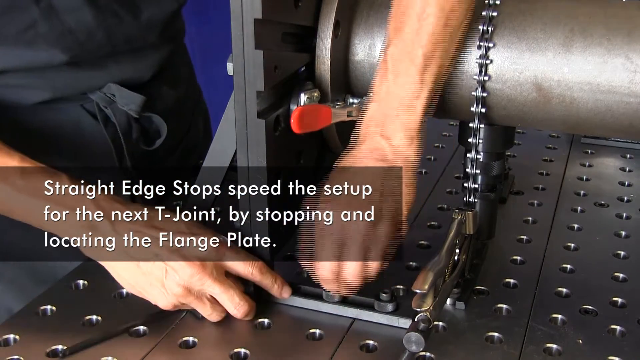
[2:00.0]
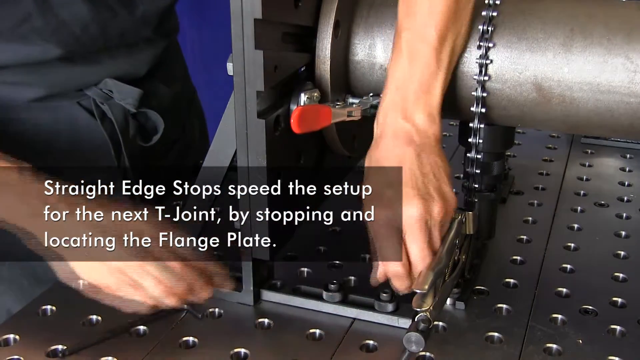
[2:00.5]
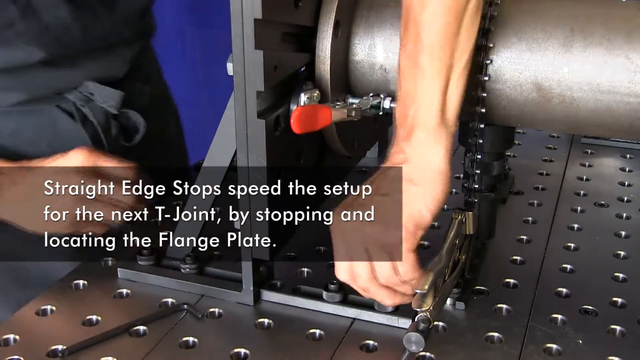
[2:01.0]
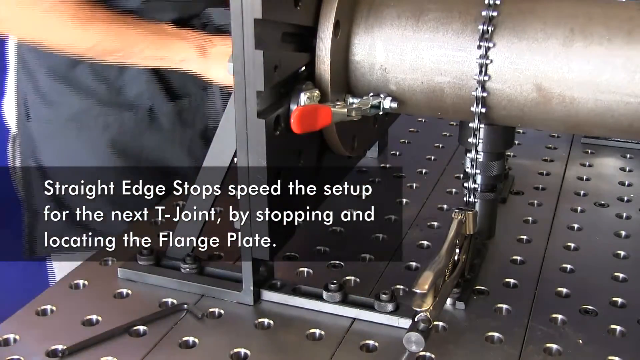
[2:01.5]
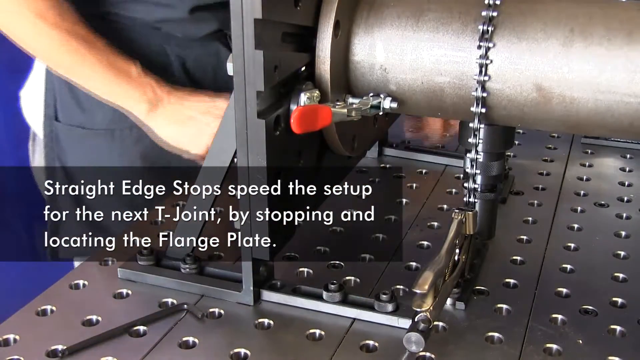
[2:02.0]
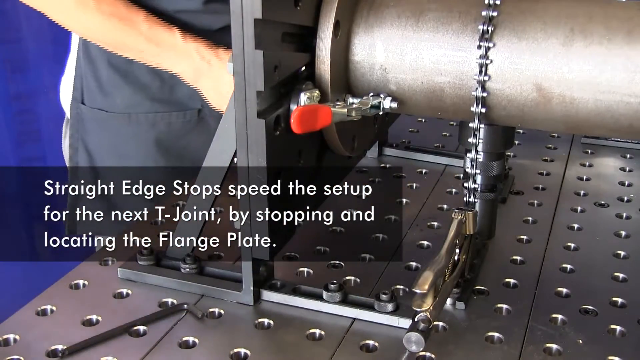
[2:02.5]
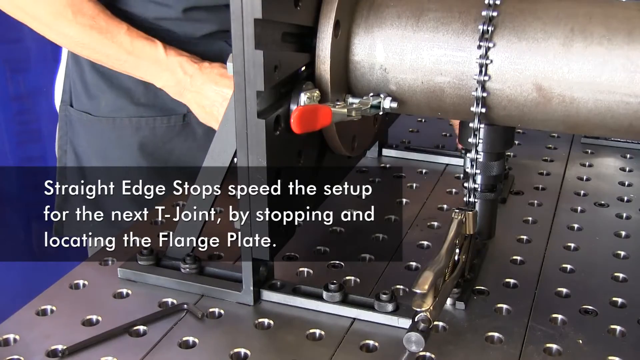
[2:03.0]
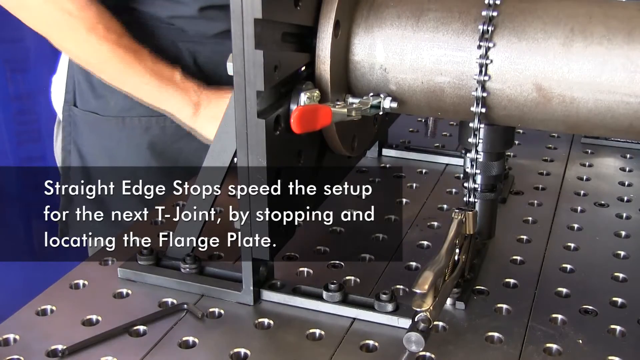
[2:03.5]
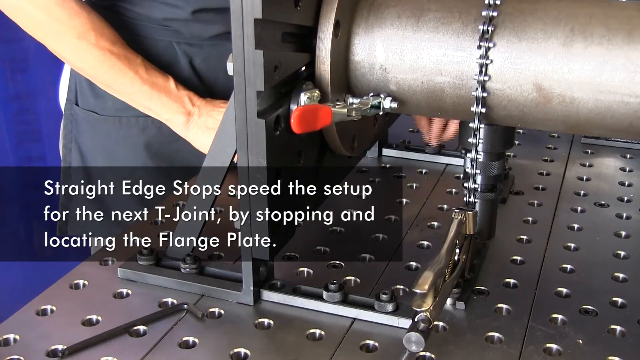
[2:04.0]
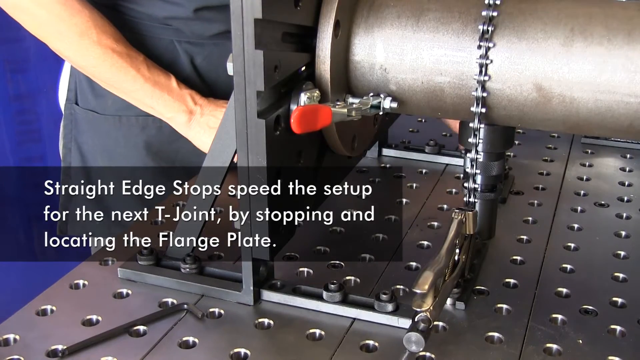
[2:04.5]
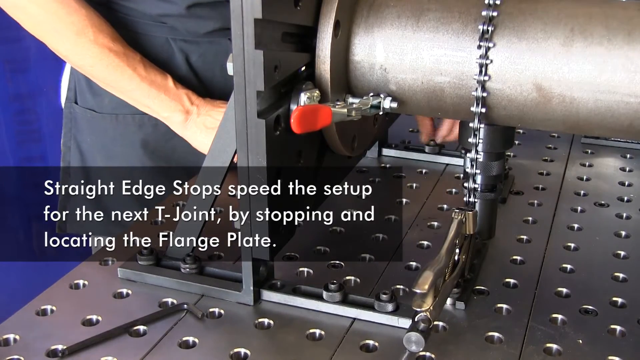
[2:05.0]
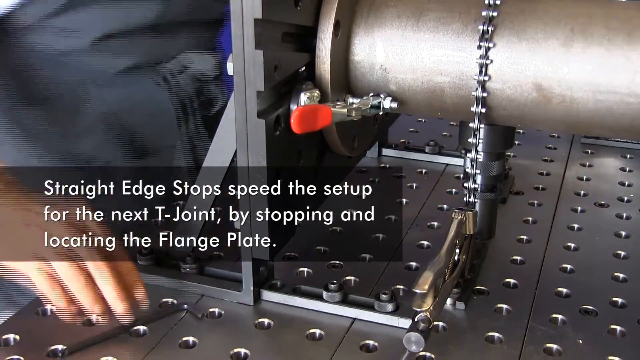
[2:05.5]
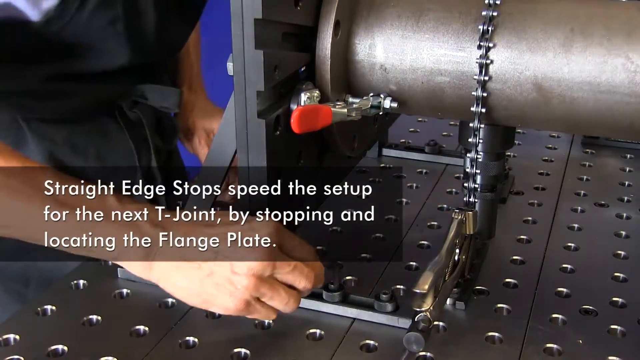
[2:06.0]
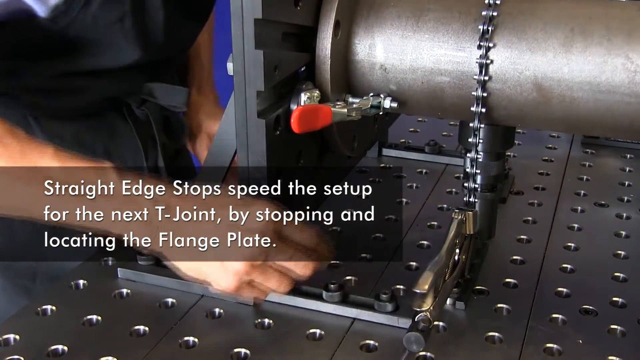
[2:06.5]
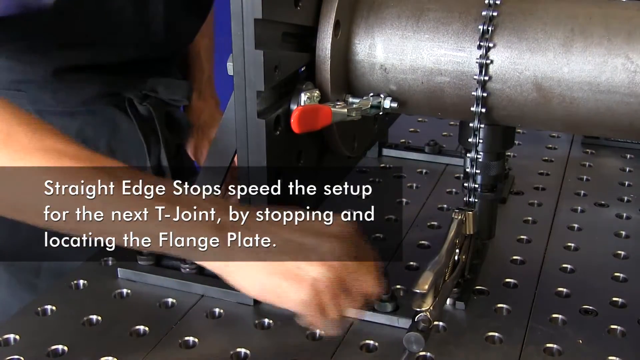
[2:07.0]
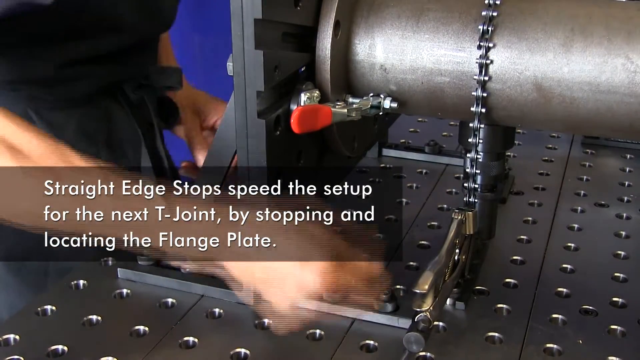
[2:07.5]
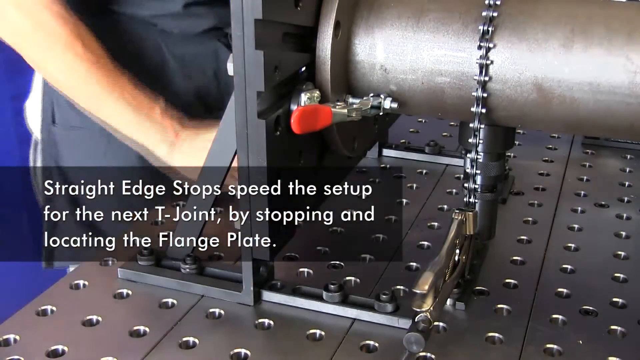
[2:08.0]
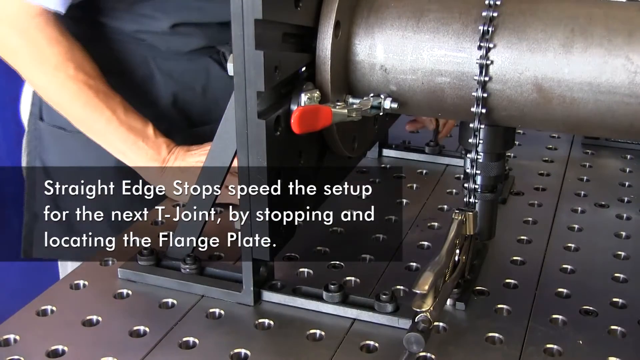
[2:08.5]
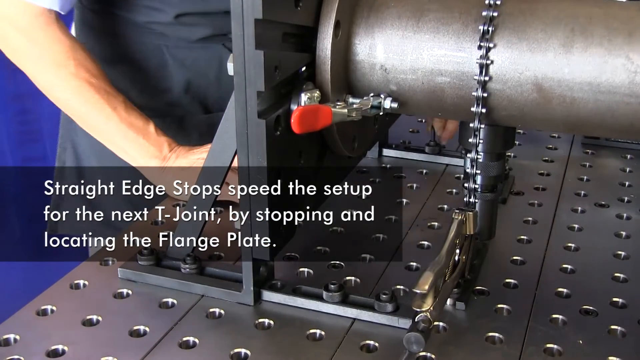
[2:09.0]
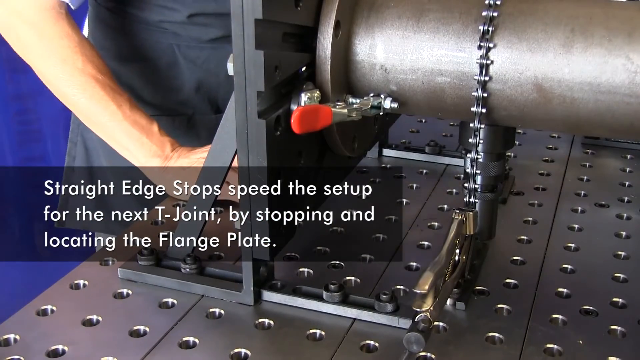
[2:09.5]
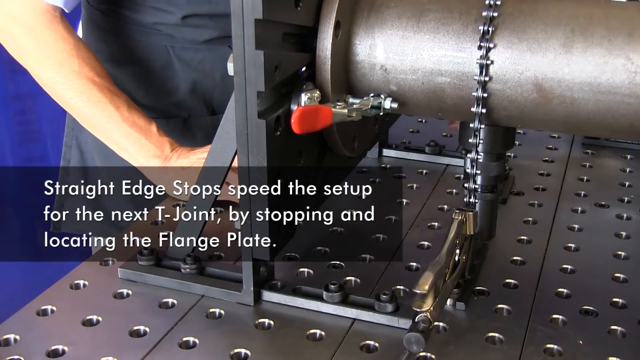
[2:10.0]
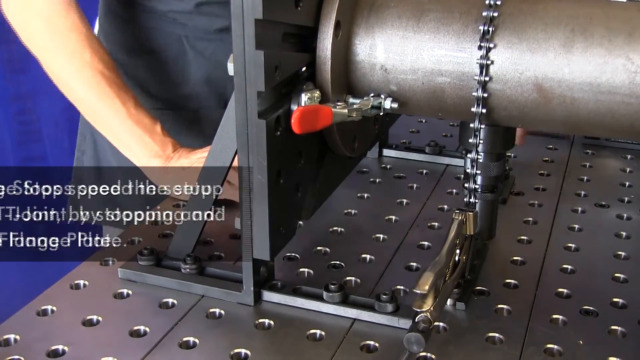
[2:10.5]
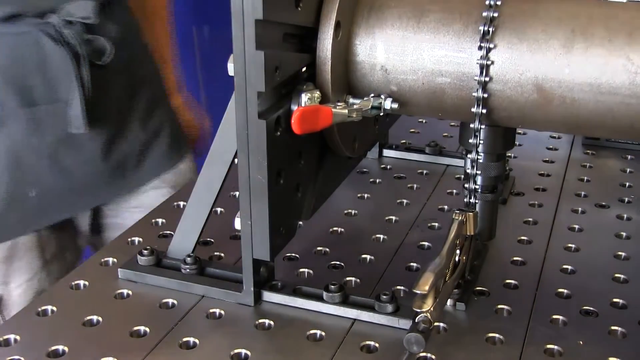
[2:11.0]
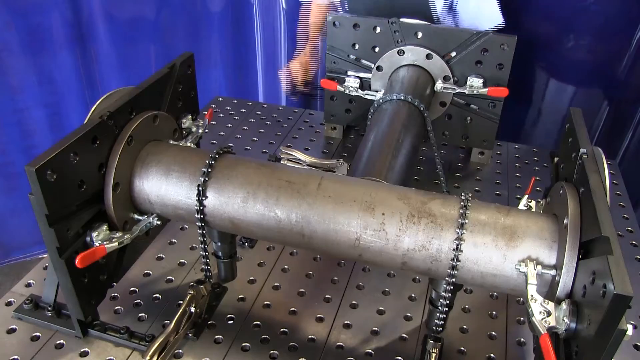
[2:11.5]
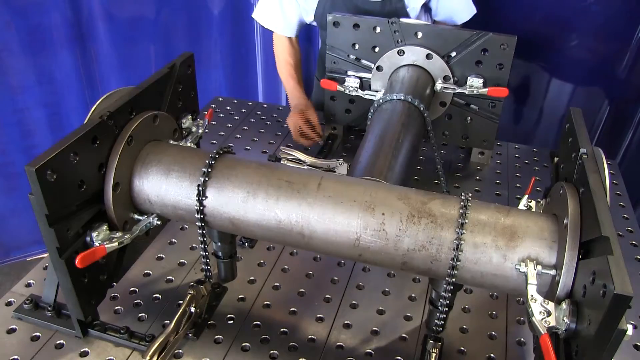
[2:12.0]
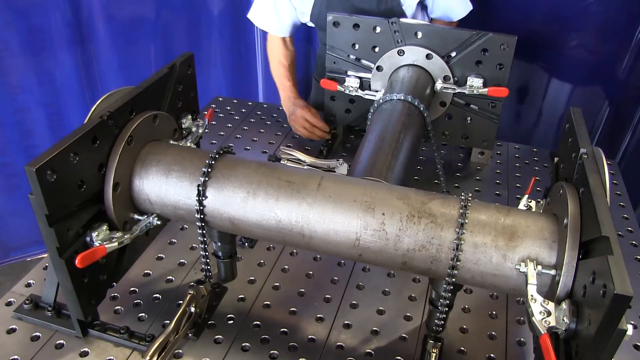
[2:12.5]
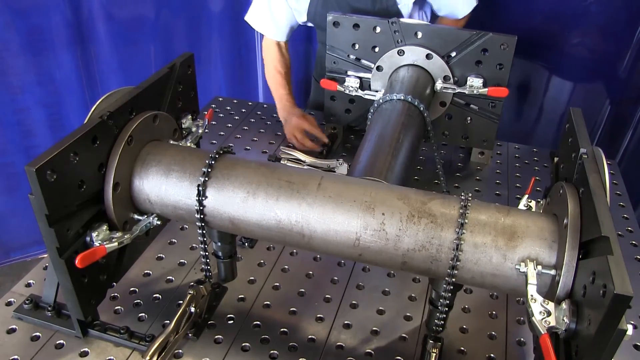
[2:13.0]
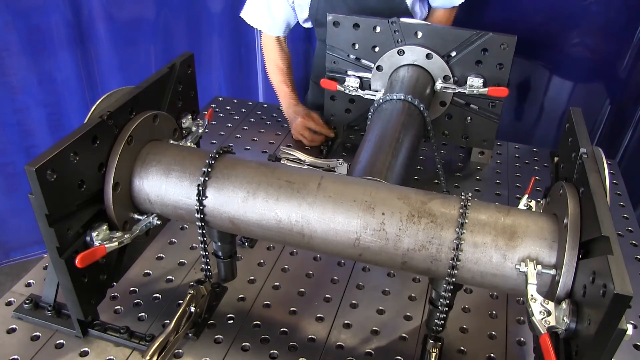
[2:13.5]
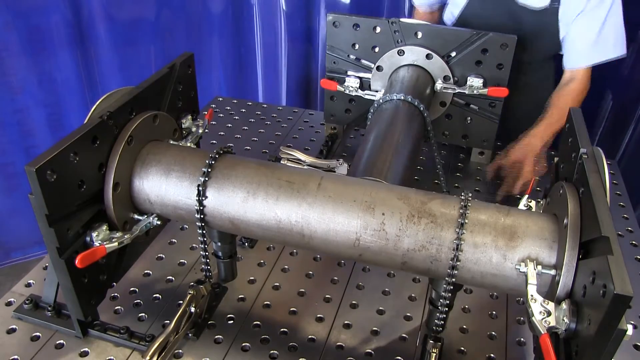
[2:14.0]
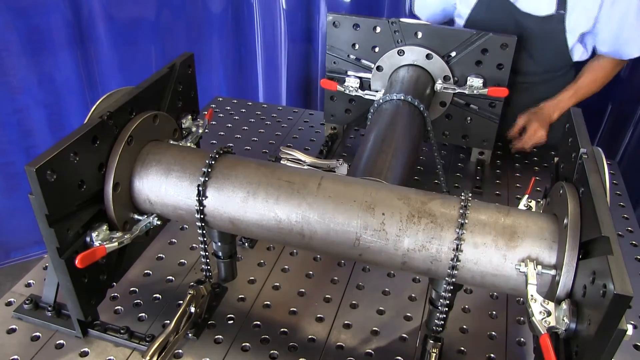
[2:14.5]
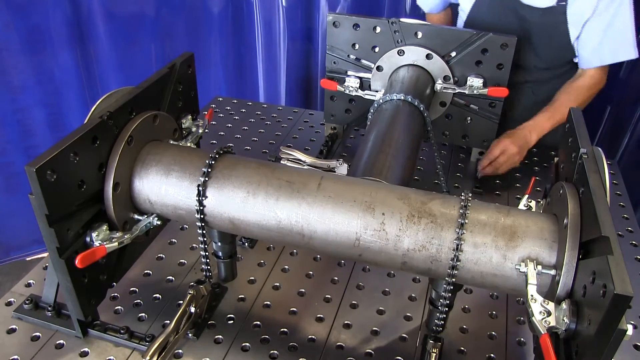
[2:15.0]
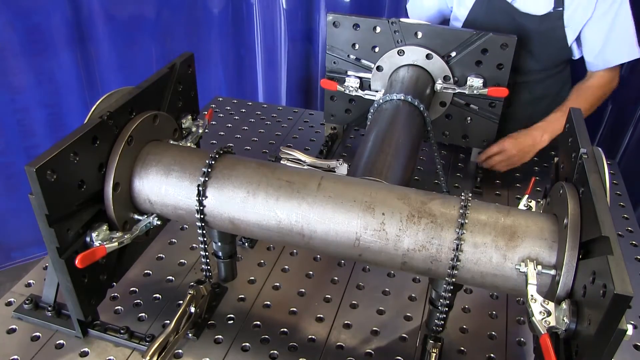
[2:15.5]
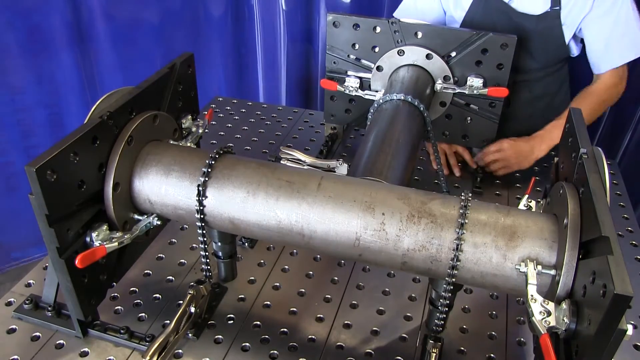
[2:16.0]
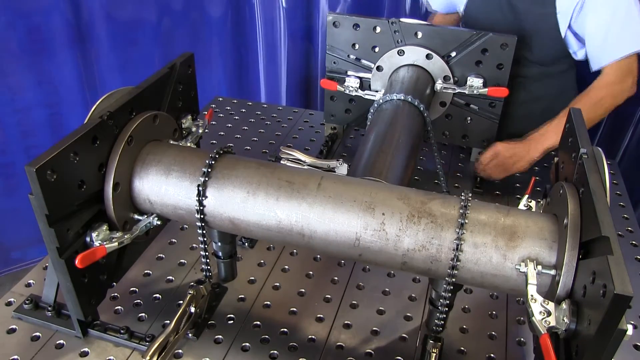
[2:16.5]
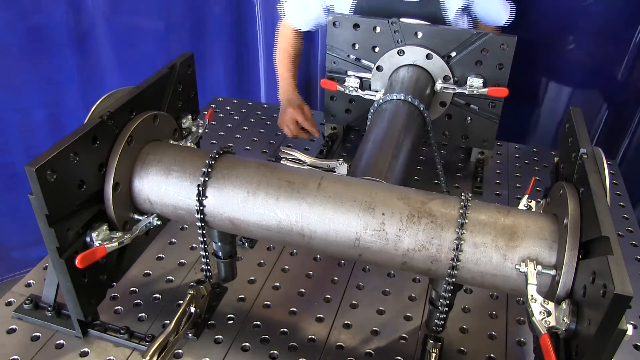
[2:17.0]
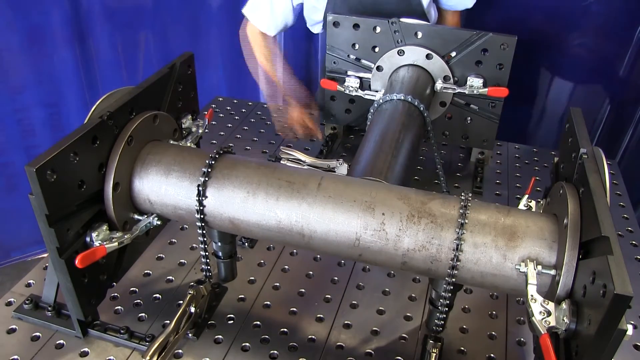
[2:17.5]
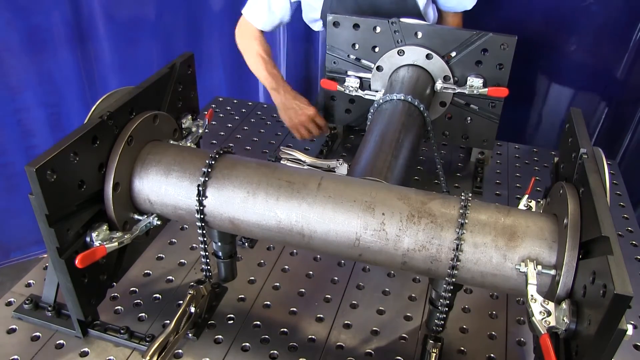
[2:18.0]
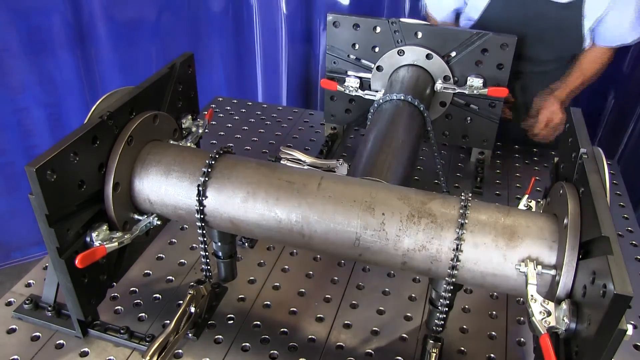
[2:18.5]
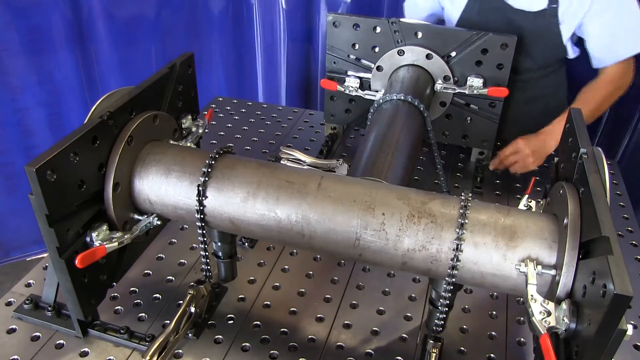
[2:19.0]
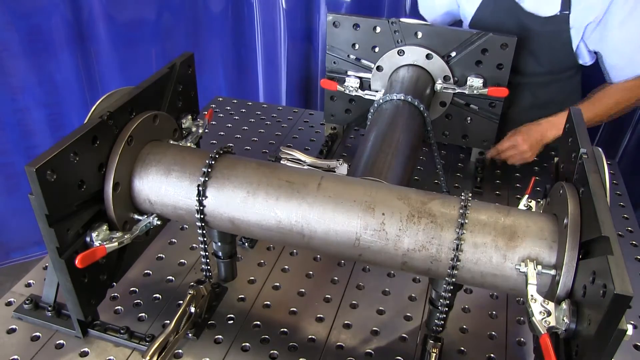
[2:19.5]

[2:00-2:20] A caption reads "the straight edge stops speed the setup for the next T joint by stopping and locating the flange plate." The person in the apron works at the end, adjusting the joints that attach to the table for support on both sides. First they use the left hand on the left side with an Allen wrench, then the right side with the Allen wrench. They check the left side again and adjust it, go back to the right side, then back to the left, alternating to make sure the supports are very tightly attached to the table. All the metal is securely placed in the holes of the table.